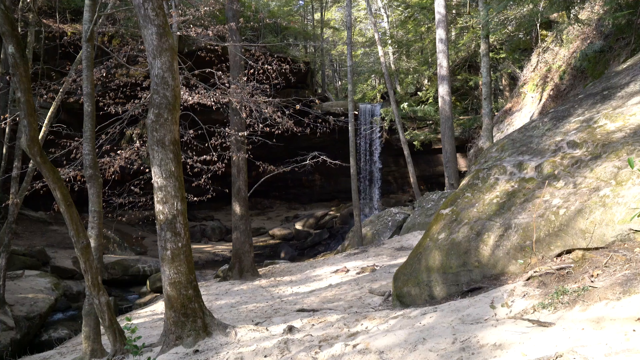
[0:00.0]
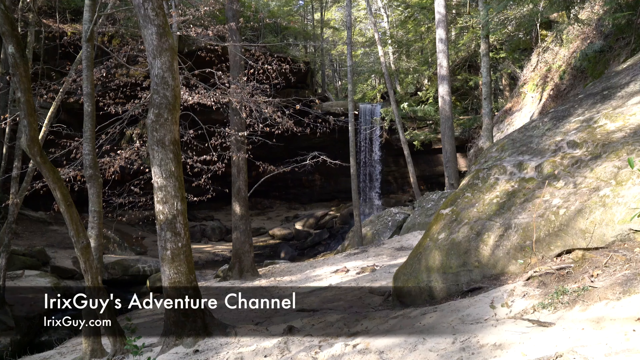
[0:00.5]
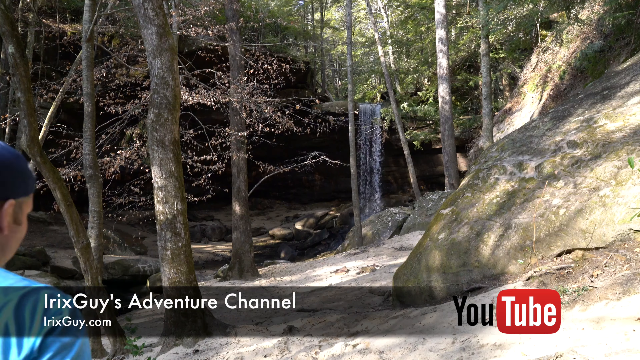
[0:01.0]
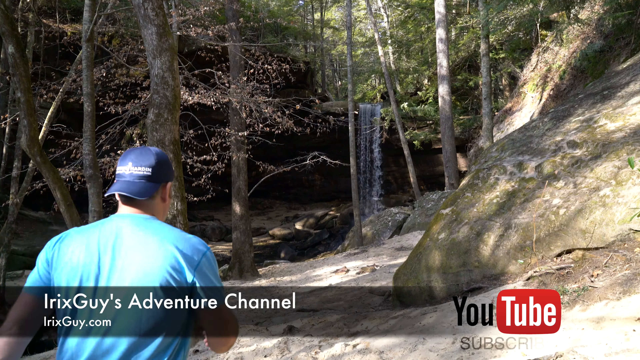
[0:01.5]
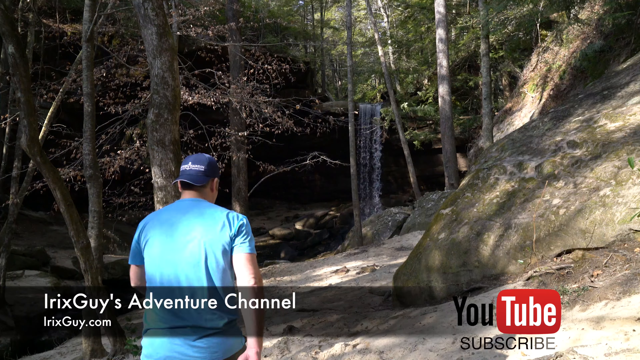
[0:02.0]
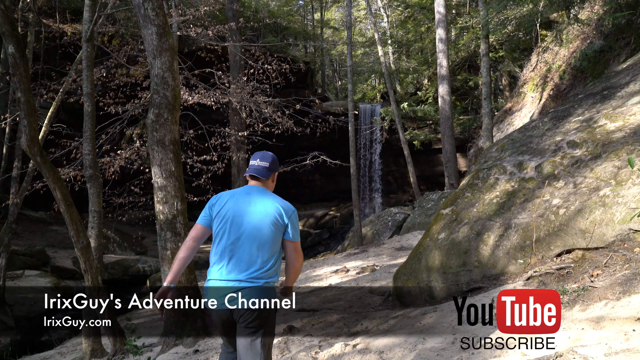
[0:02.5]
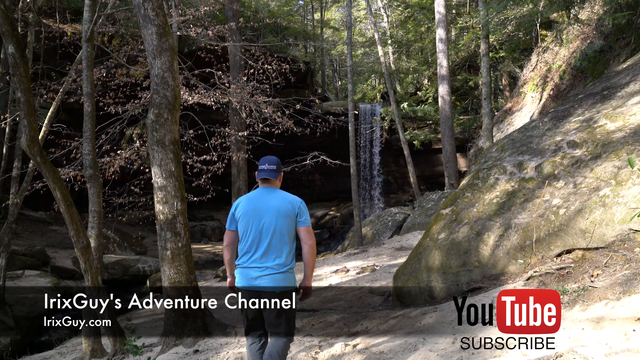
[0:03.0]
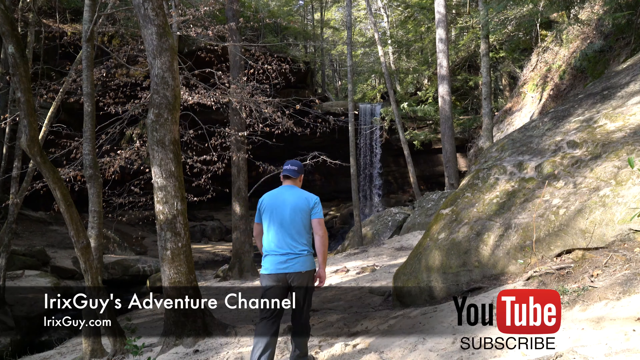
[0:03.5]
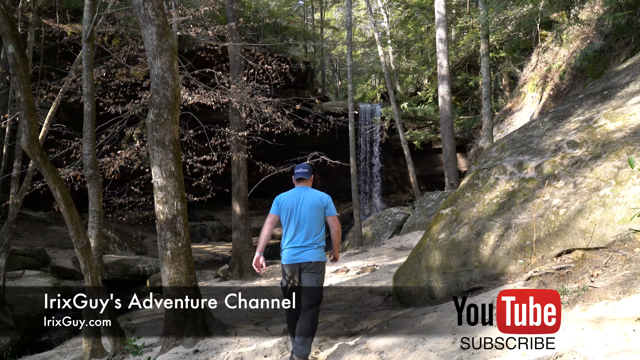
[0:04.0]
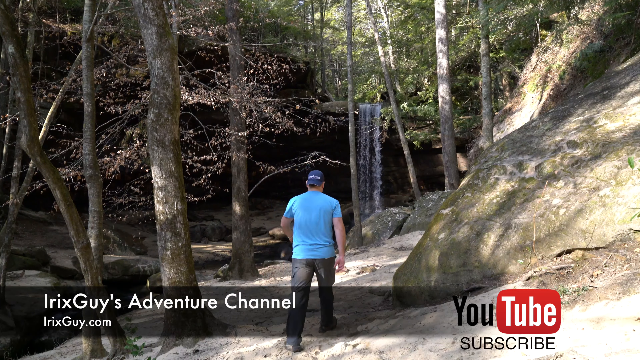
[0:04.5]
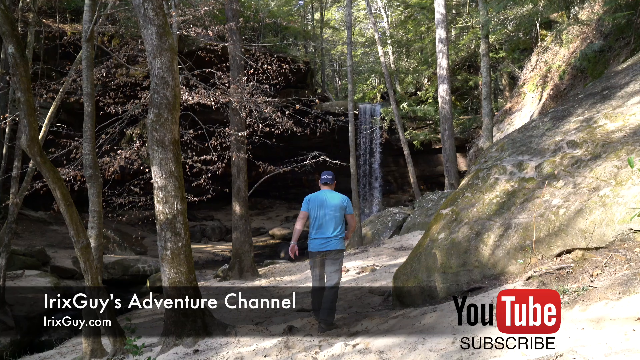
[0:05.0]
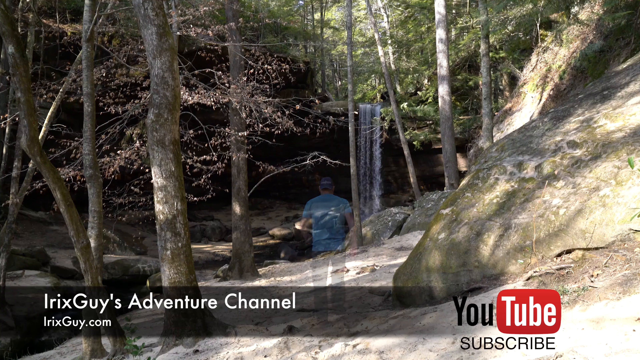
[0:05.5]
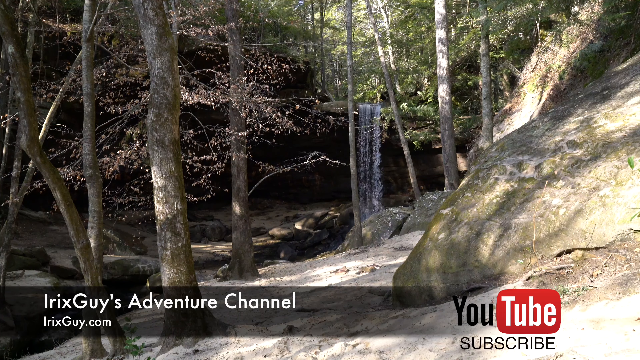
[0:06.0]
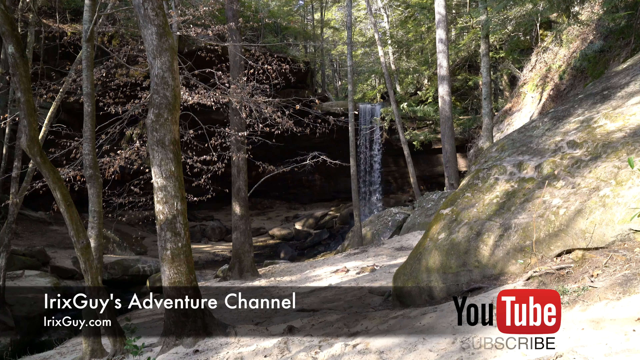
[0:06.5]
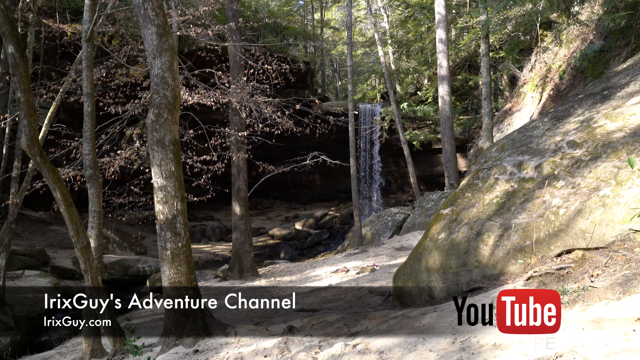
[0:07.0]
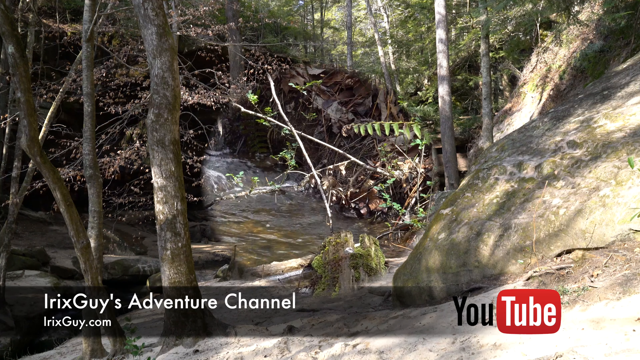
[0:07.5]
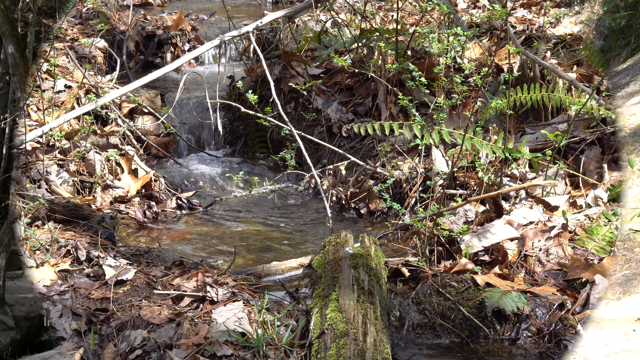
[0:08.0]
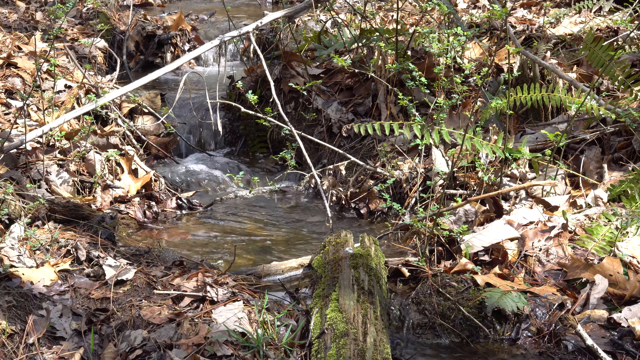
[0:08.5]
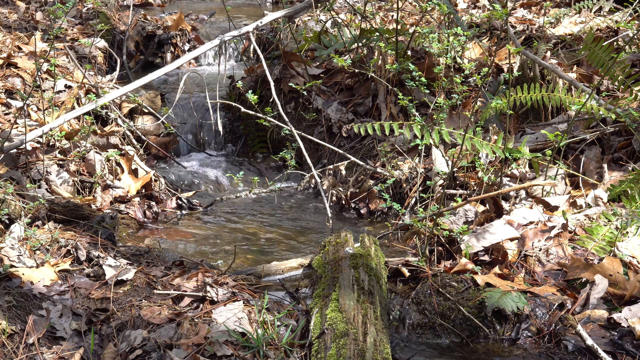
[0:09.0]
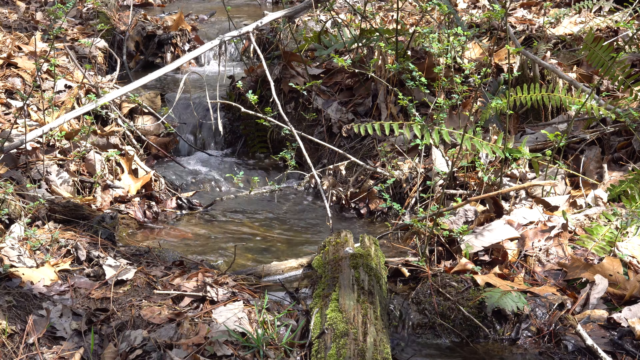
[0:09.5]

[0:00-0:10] A waterfall appears; it is not very high, only a few feet, and the stream of water is slim. On-screen text reads "IRIX guys adventure channel" and "IRIX guy.com". Another waterfall is then shown, along with a log. A man wears a short-sleeved shirt. On the left side are trees that have few leaves and look very thin, while some trees further back have green leaves.